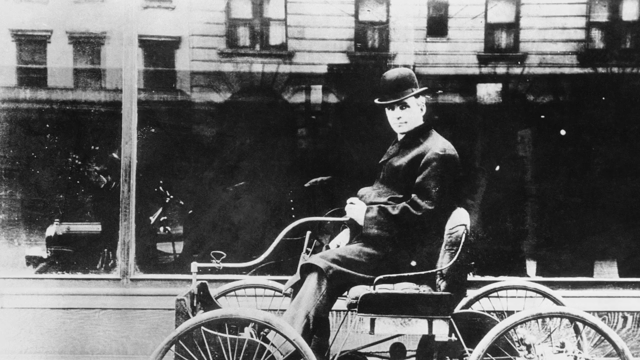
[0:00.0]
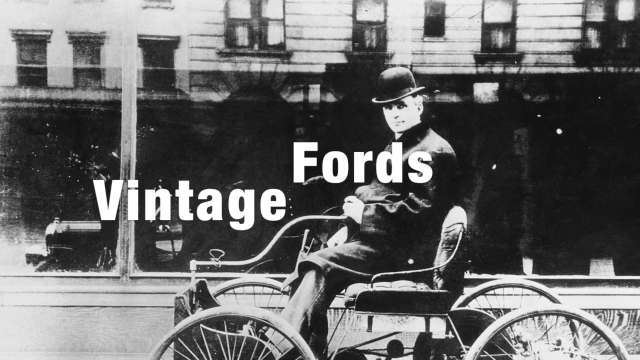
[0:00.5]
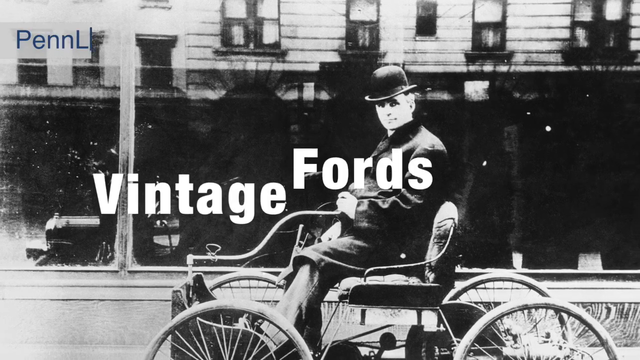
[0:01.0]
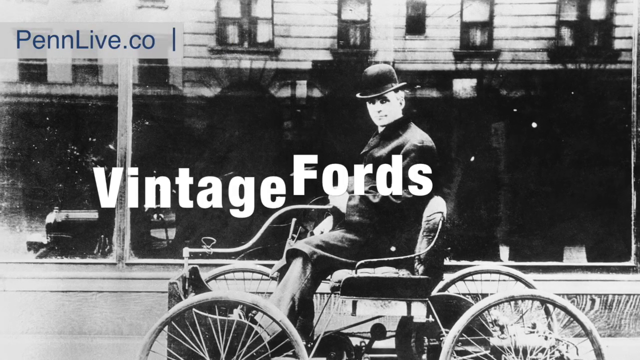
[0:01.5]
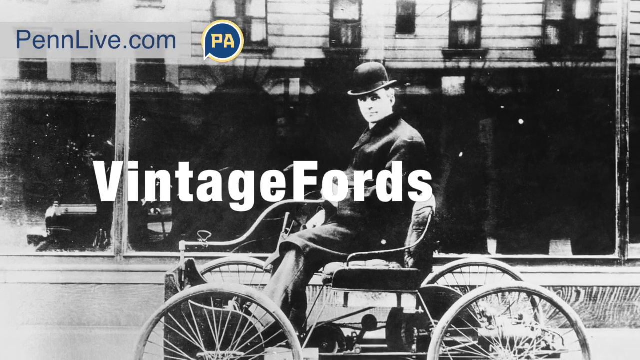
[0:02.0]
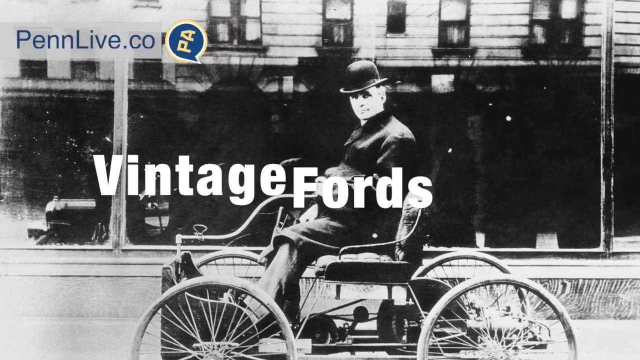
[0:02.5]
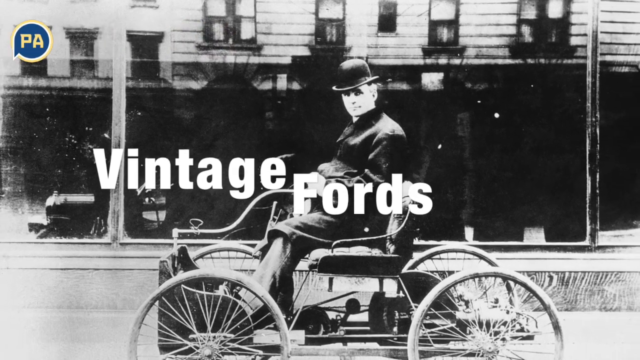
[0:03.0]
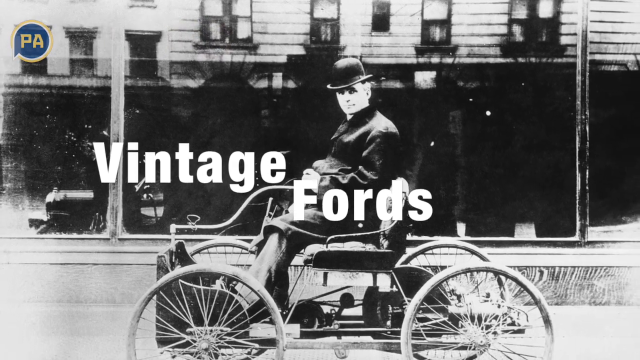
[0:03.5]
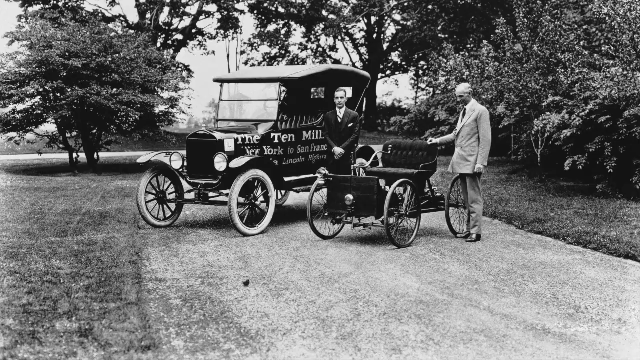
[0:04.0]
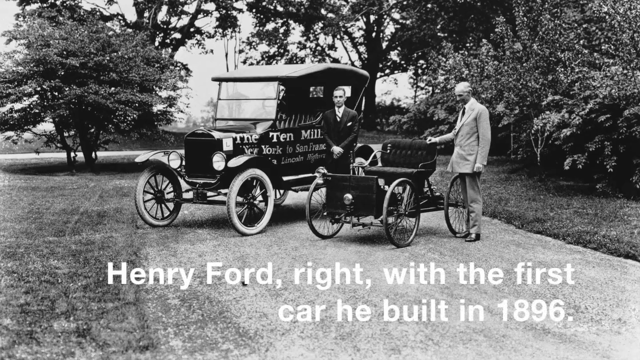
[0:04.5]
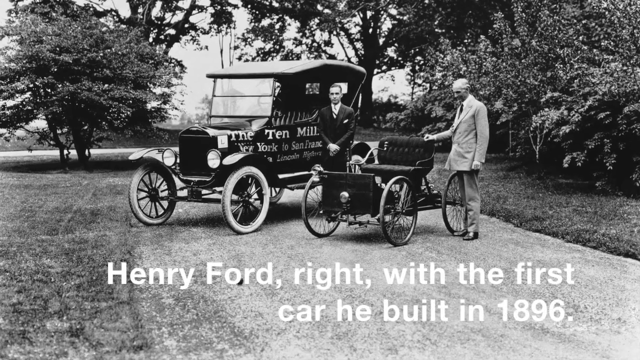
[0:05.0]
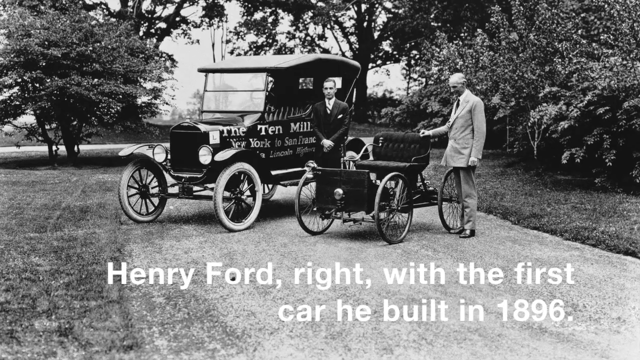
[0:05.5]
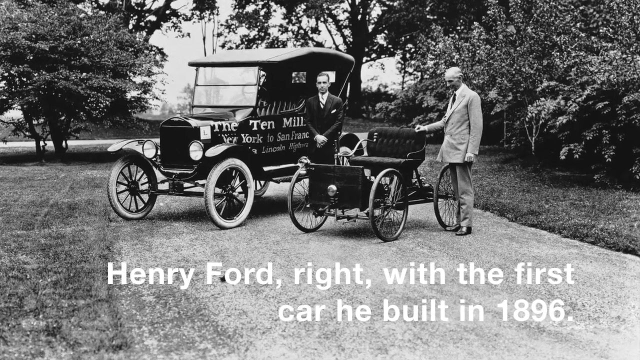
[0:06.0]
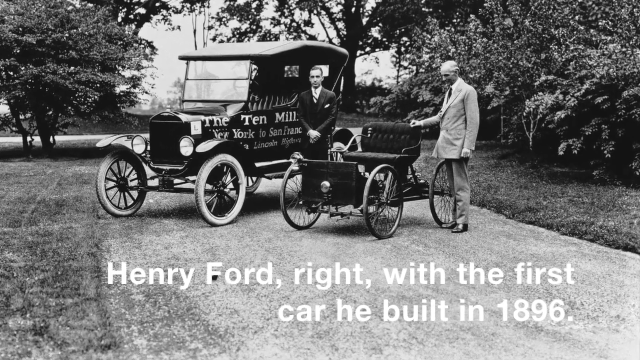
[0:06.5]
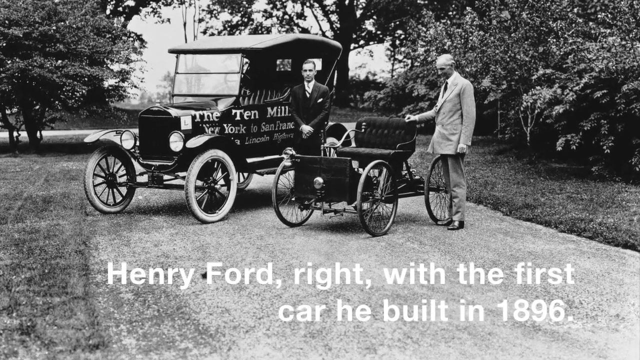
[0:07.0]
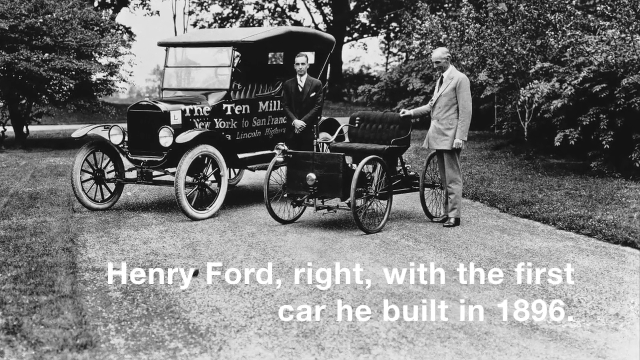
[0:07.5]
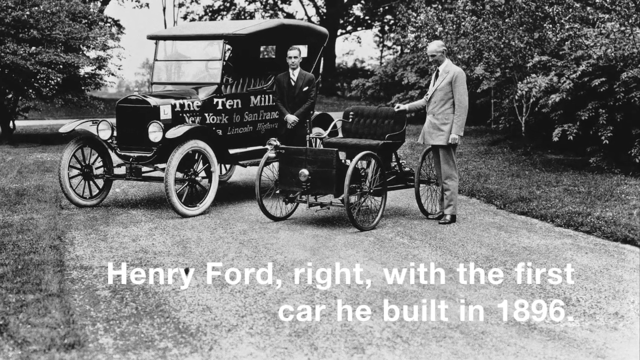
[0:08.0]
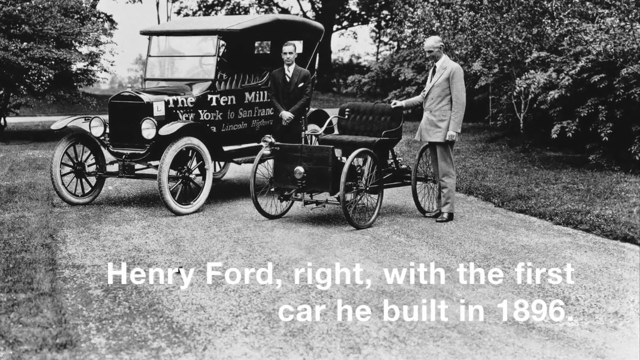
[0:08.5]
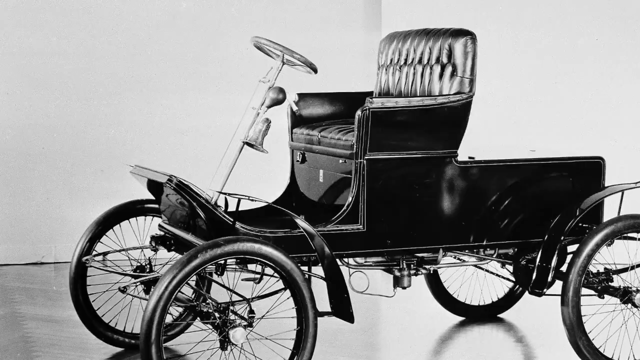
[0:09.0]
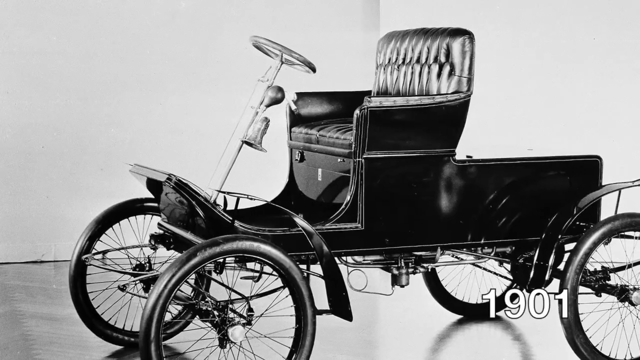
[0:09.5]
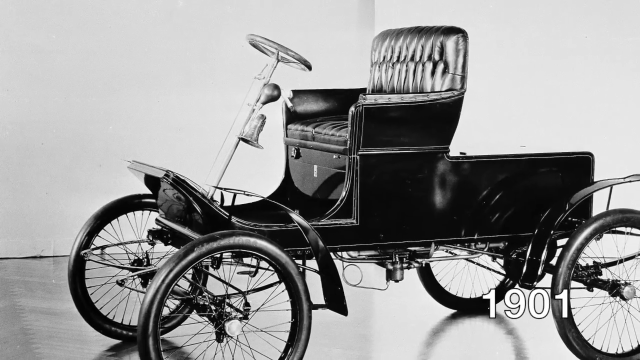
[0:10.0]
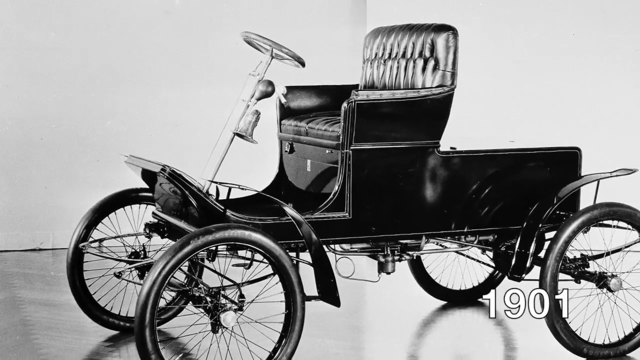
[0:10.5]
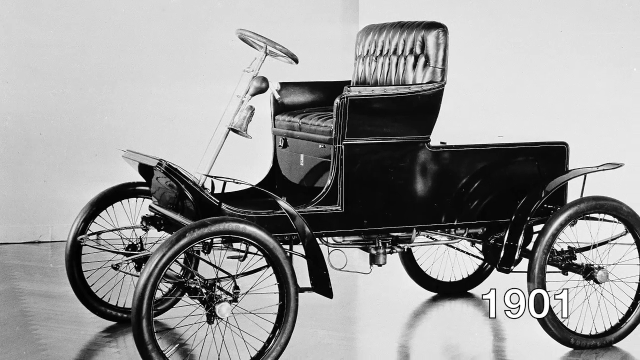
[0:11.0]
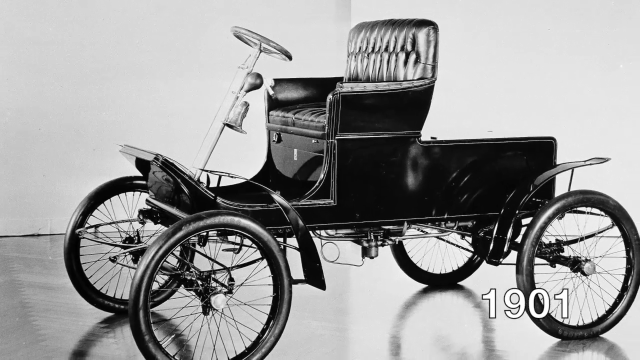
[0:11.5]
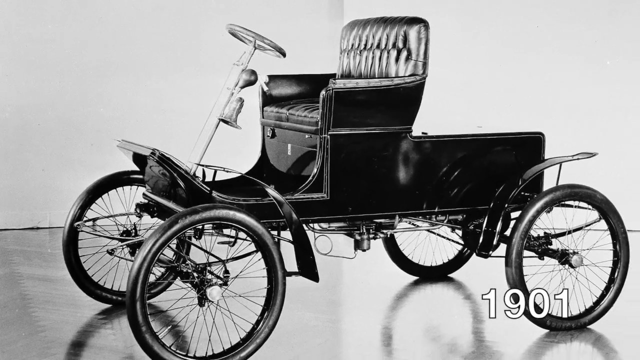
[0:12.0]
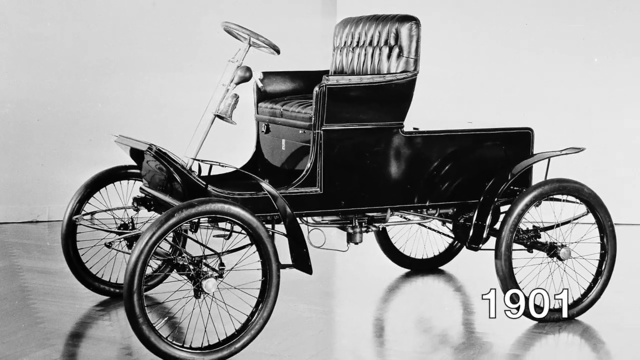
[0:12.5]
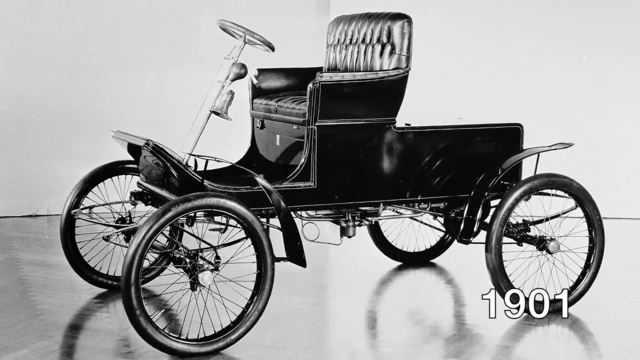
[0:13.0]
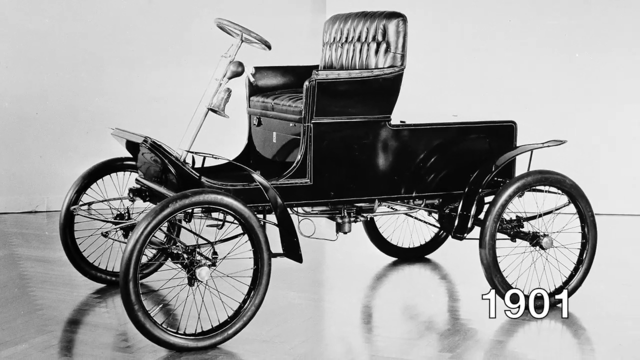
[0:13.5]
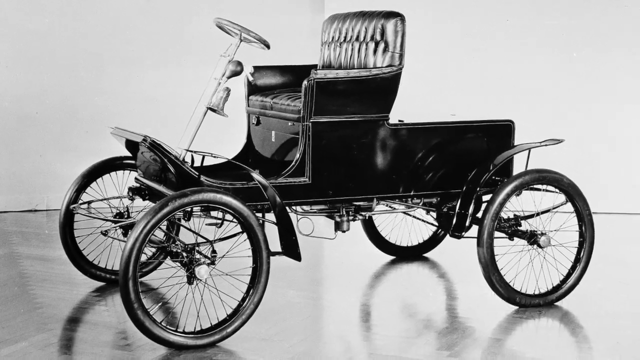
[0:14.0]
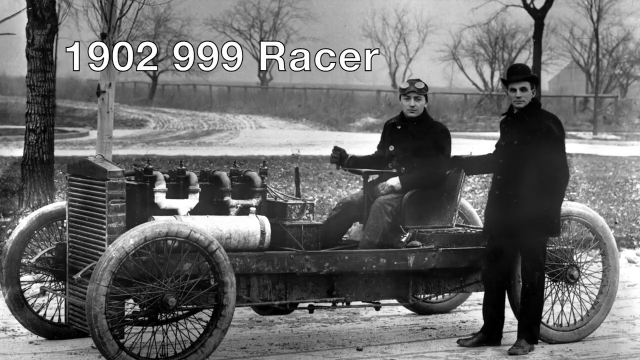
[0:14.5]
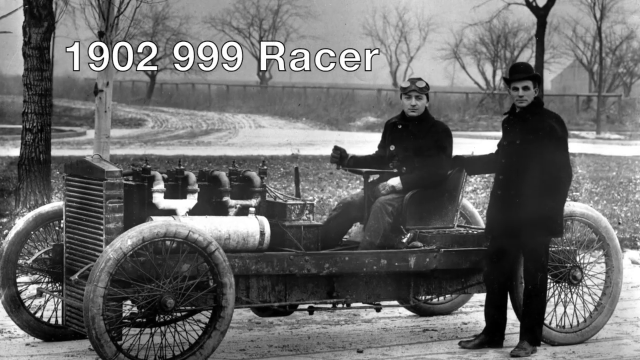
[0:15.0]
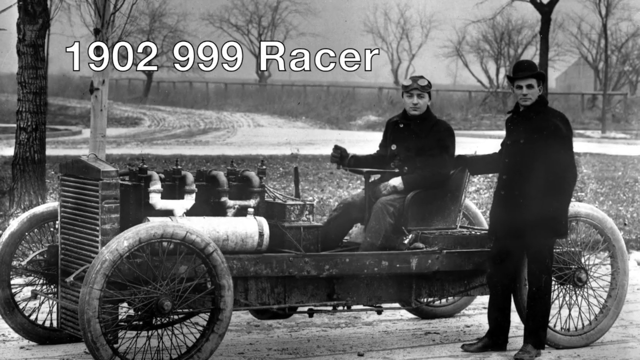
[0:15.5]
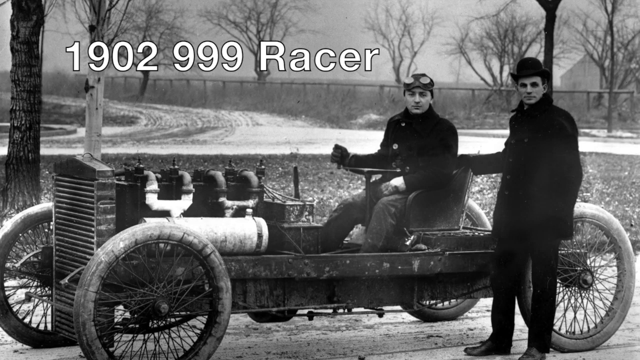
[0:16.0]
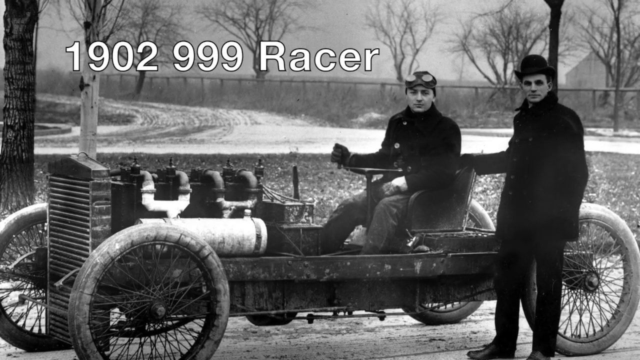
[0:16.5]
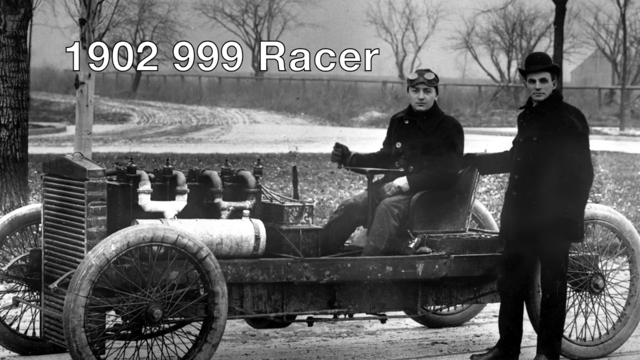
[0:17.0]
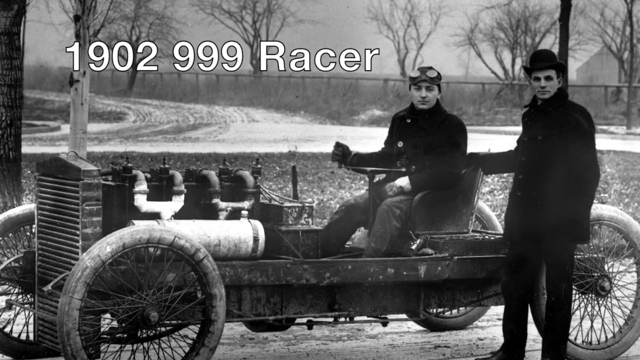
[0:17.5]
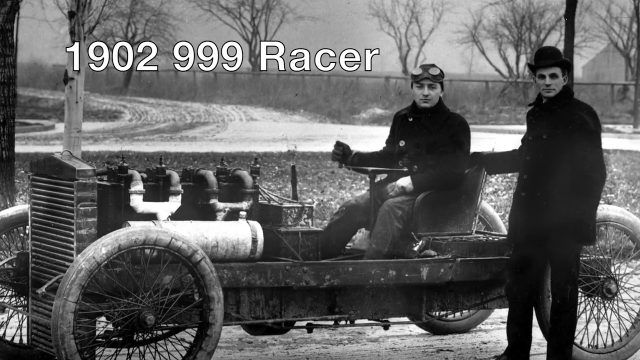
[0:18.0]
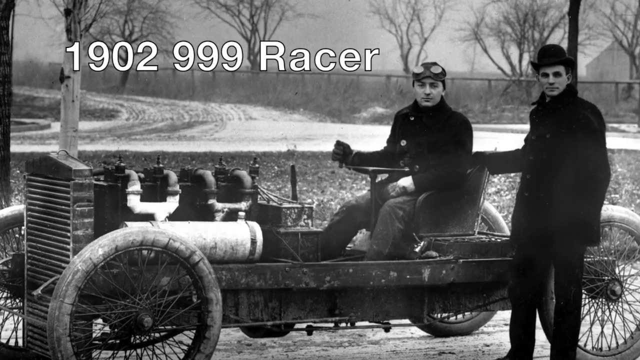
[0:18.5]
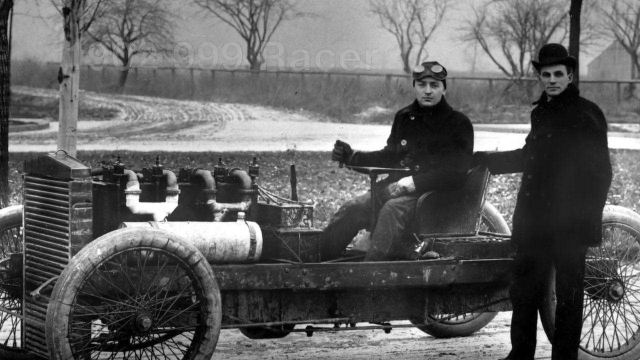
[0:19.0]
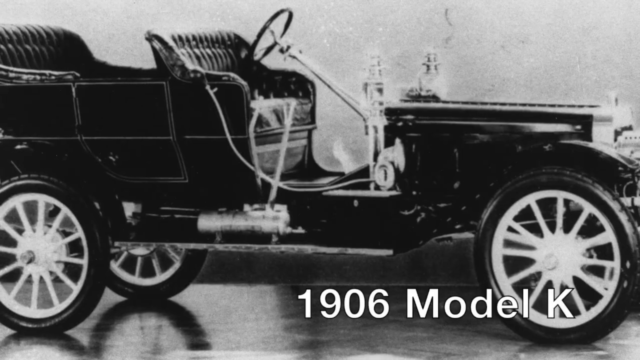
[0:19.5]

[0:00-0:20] This video is a collection of photographs titled Vintage Fords. It begins with an image of Ford sitting in one of his vehicles. He apparently created his first automobile in 1896, and the photos go on to show how the models evolved over time: Ford in front of his first vehicle, then the 1901 model, followed by the 1902 999 Racer, and then the 1906 Model K. All the images are in black and white. The vehicles appear to become increasingly larger, more substantial and sturdier in frame, and they seem to carry more people over time, with comfort features such as sewn seats and other conveniences built into the designs. A banner ribbon along the top at the beginning shows that the collage is presented by Penn.Live.